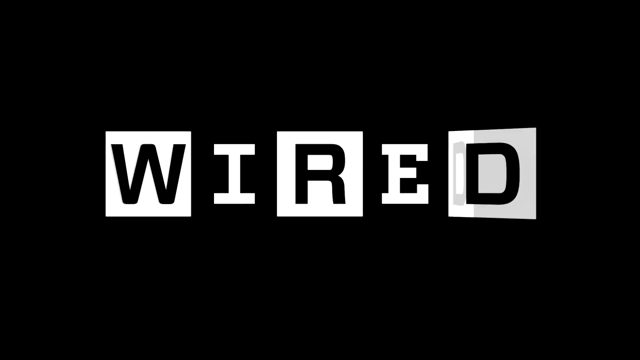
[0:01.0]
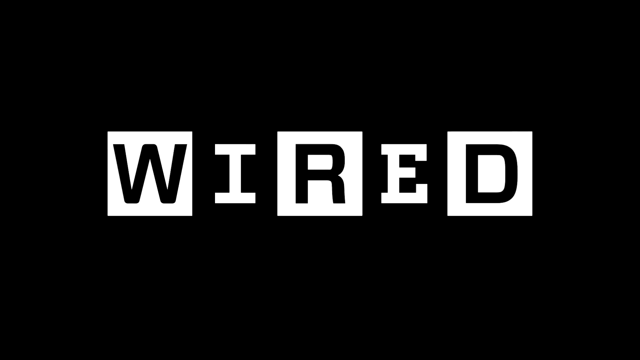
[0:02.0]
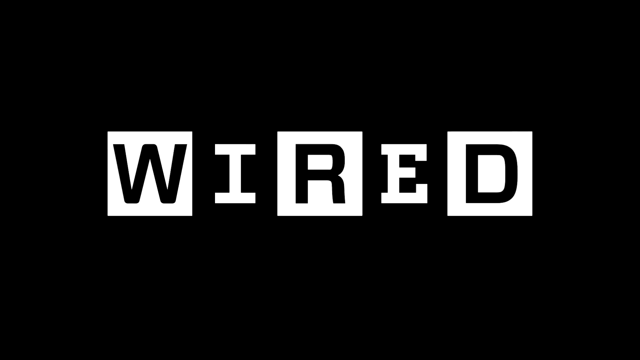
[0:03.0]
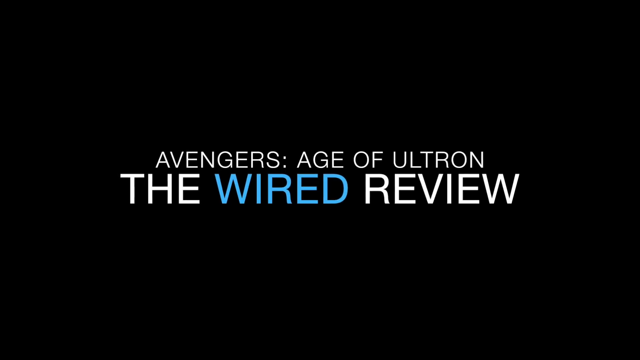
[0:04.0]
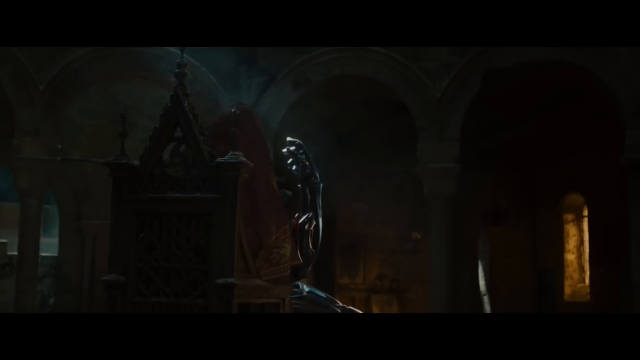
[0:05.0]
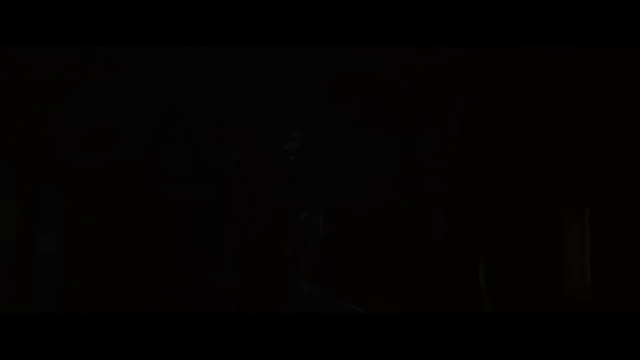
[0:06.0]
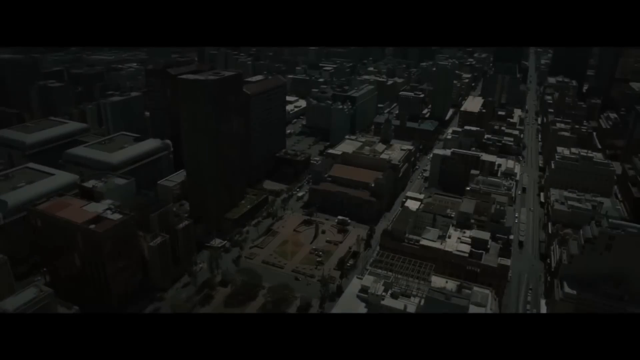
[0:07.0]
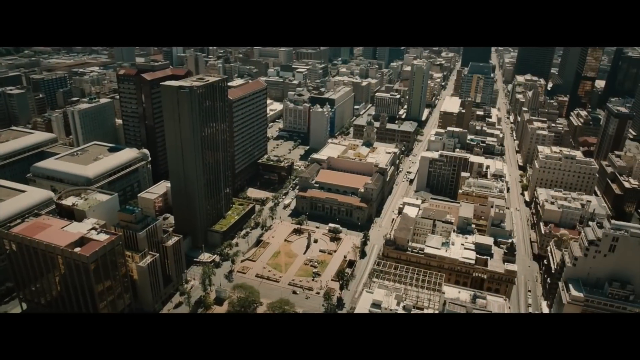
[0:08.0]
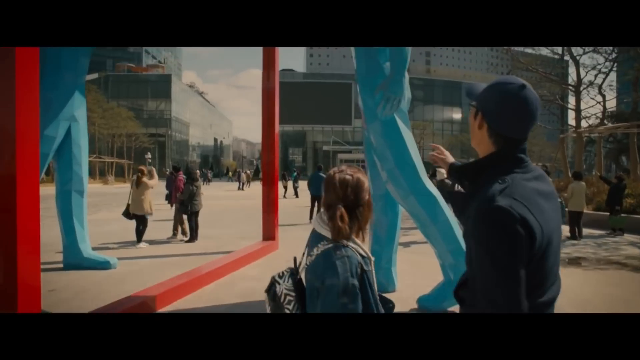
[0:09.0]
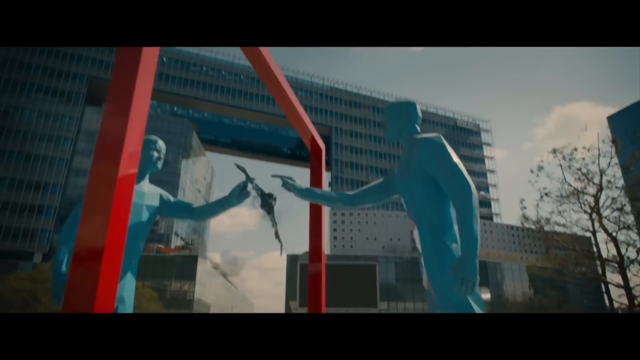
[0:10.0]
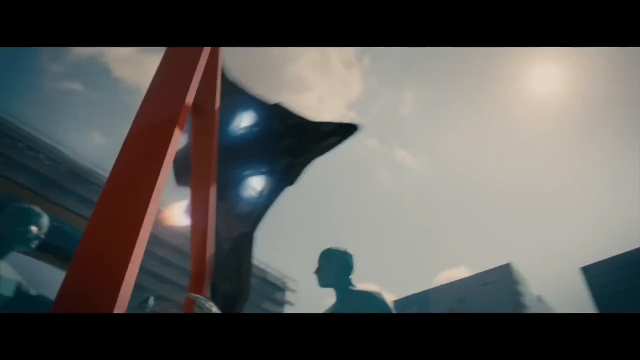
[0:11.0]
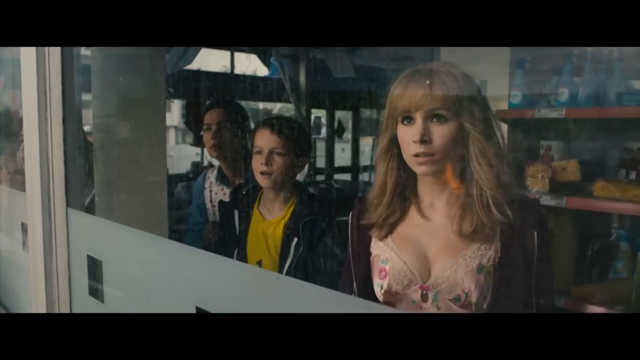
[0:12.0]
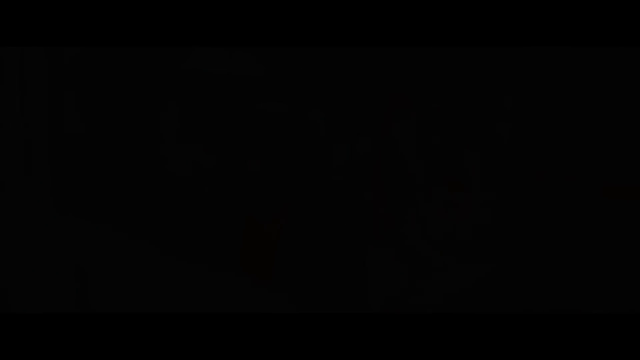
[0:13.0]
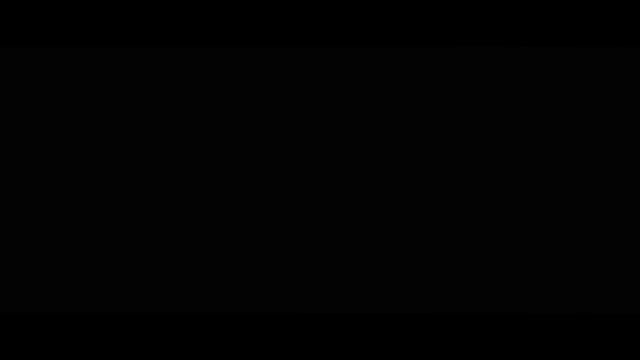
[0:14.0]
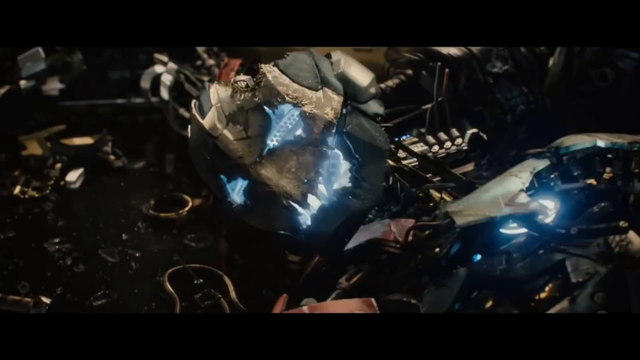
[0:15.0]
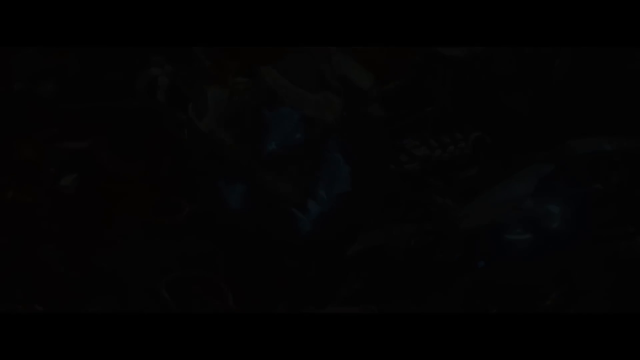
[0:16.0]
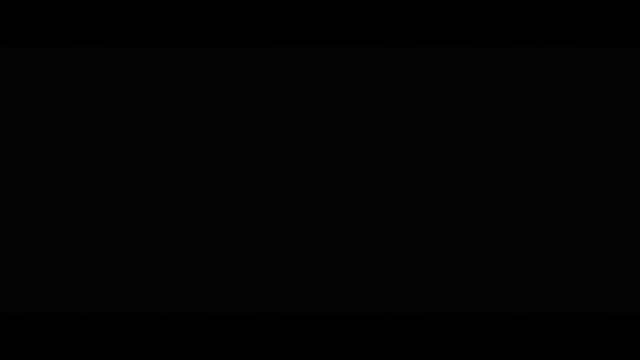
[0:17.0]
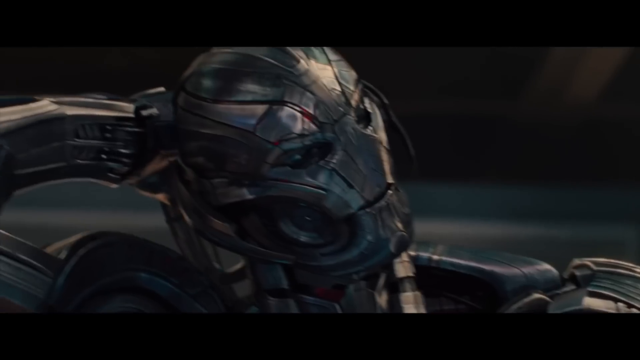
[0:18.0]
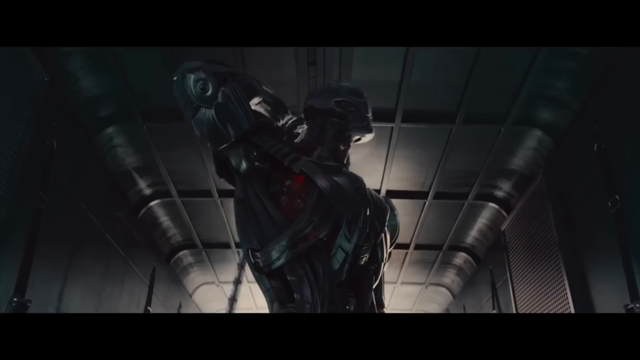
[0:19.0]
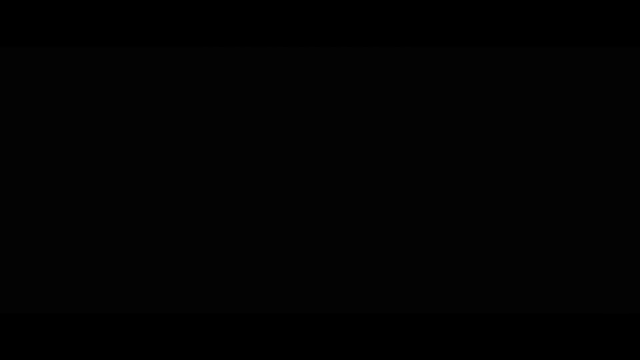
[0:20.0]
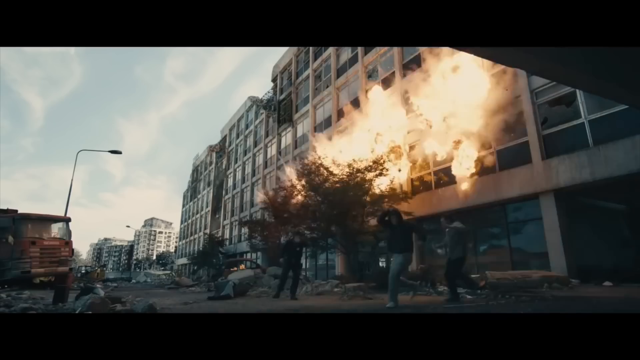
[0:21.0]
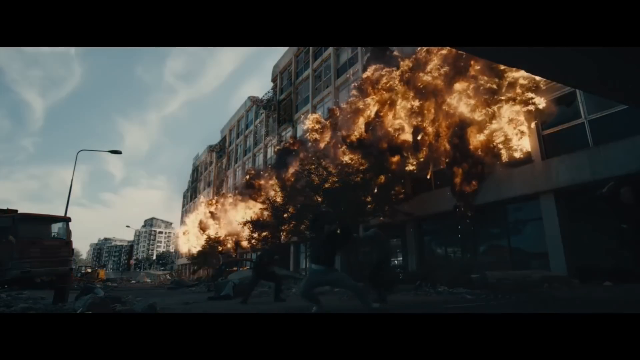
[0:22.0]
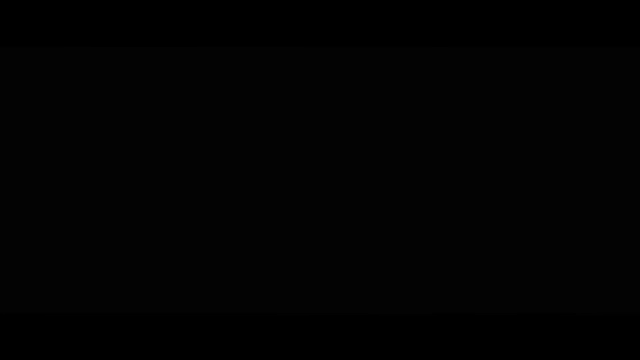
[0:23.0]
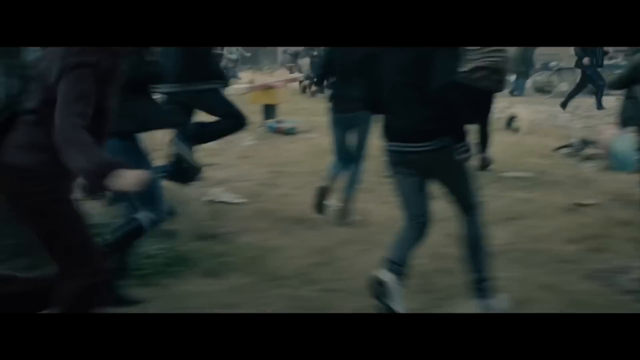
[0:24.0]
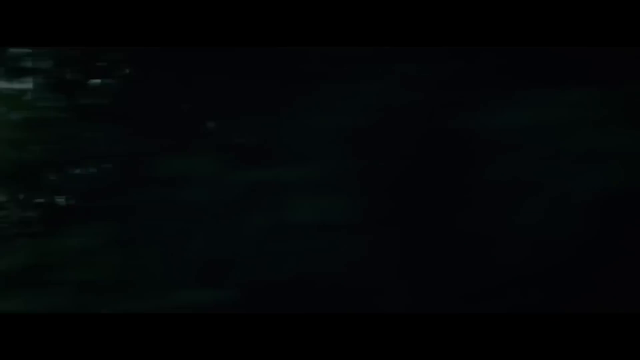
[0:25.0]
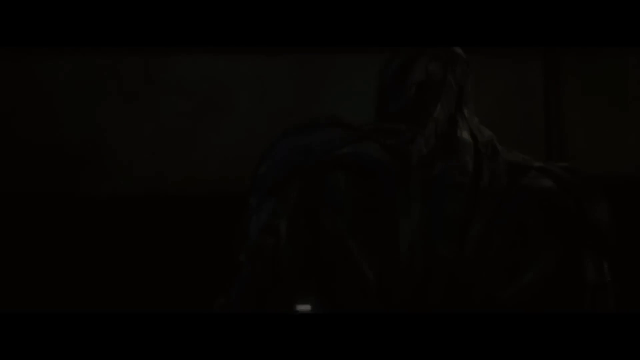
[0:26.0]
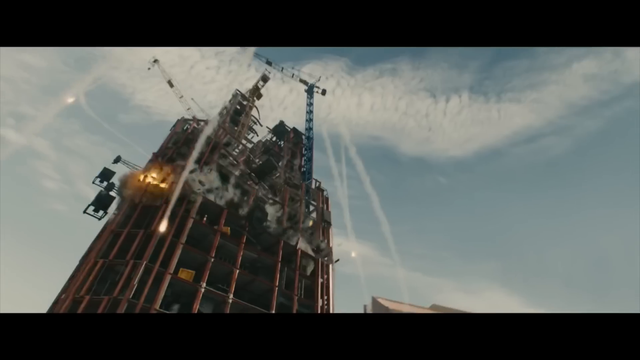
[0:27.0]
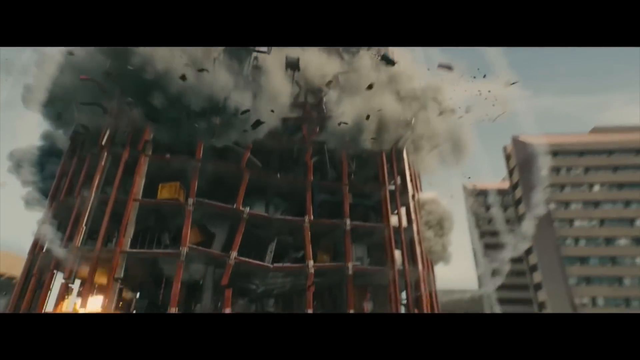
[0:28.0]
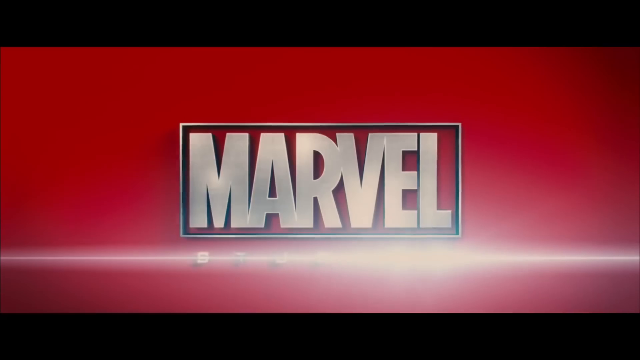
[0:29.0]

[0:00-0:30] A blank white screen cuts into a block, followed by effects on a black-and-white background and a design of black and white blocks, and then a title. An individual appears in darkness, followed by a drone view of a city and a street view of one male and one female standing in front of what looks to be a statue. The Avengers spaceship flies above the city. Lightning comes out of someone's eyes, and then a cyborg of some sort appears. A few buildings blow up and people run in distress. Some of the same shots appear again before a cut to a scene showing Marvel Studios.